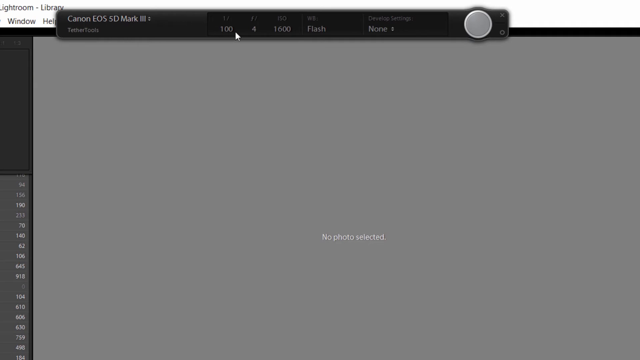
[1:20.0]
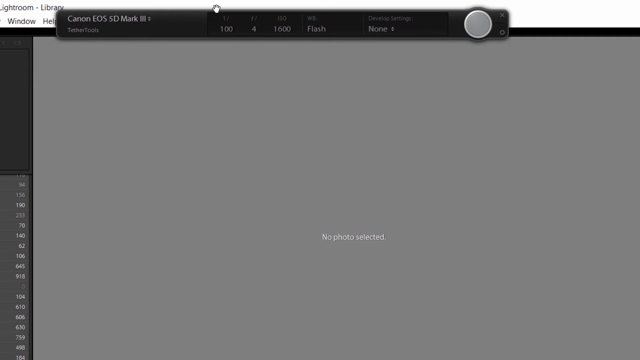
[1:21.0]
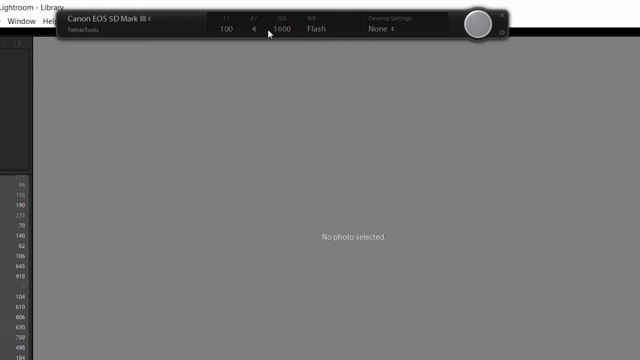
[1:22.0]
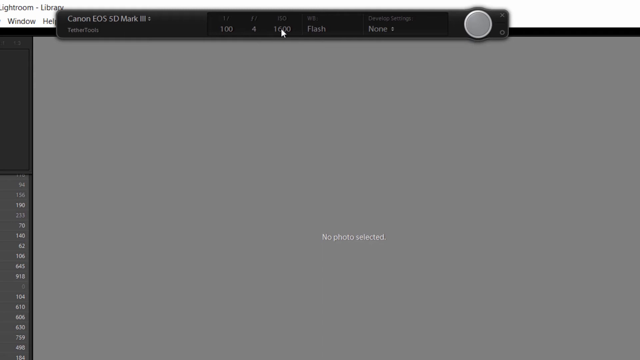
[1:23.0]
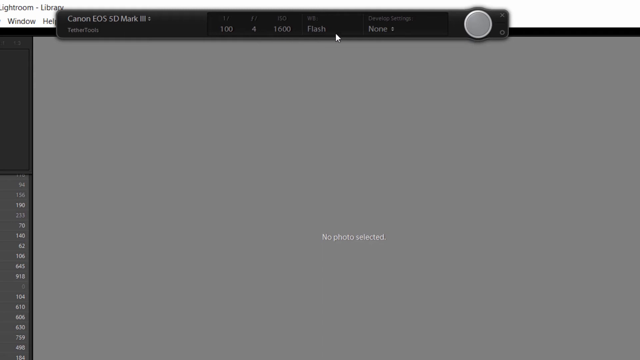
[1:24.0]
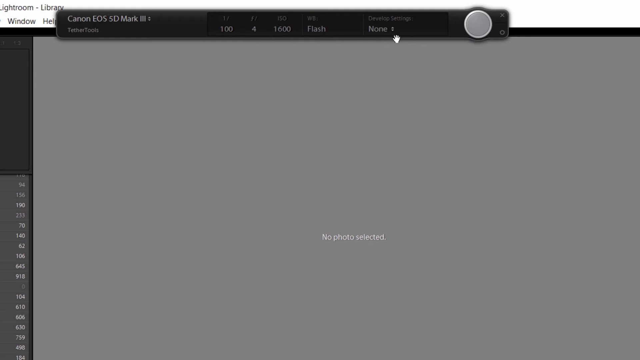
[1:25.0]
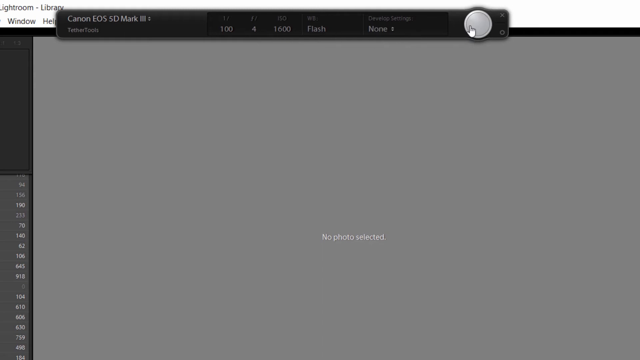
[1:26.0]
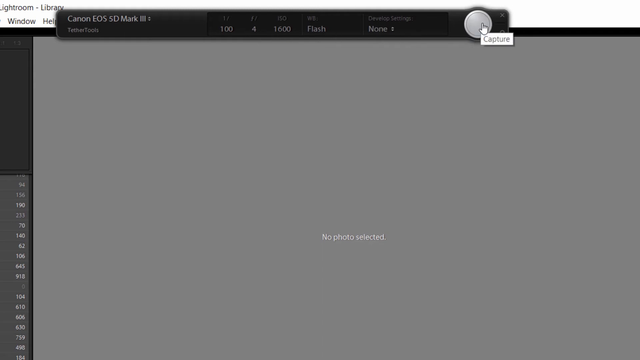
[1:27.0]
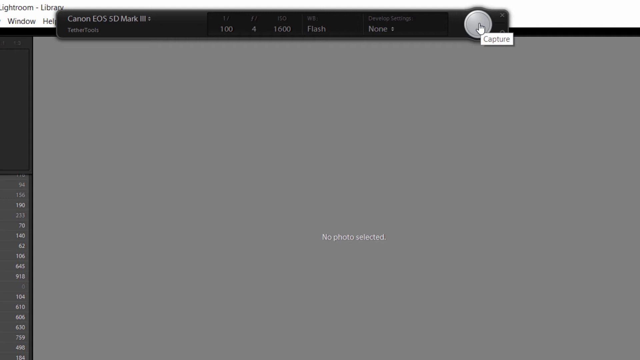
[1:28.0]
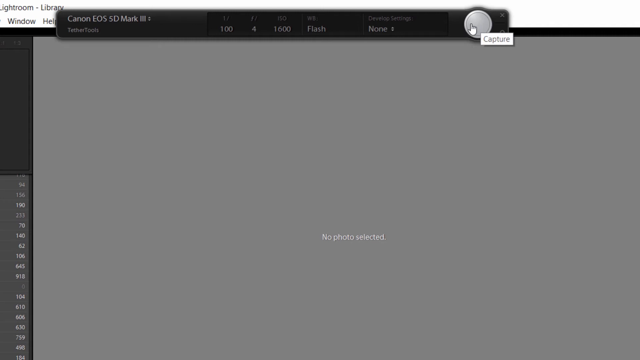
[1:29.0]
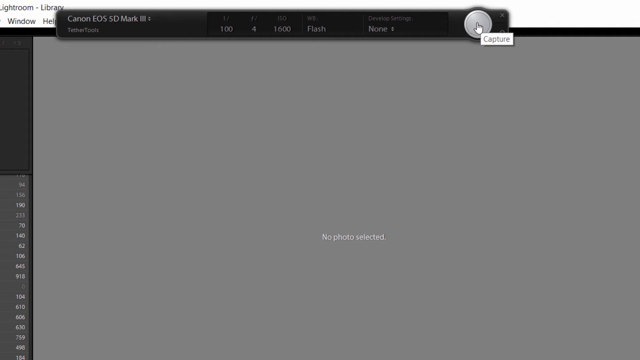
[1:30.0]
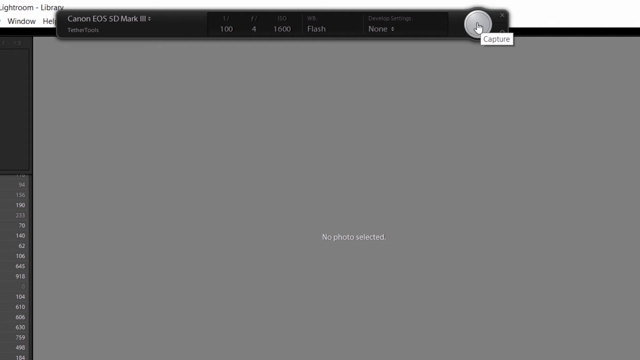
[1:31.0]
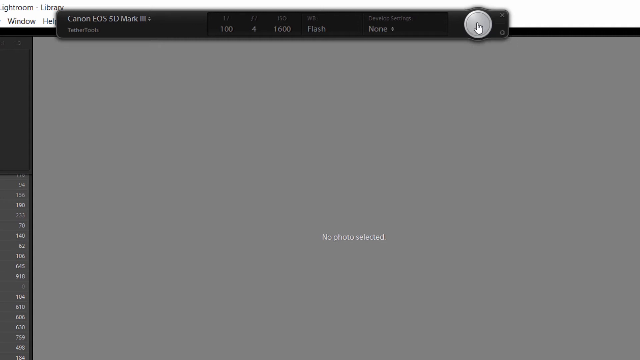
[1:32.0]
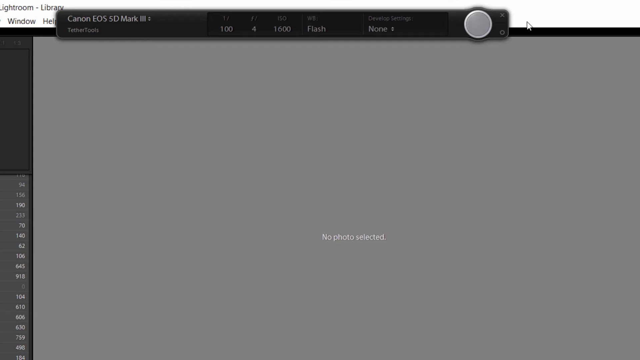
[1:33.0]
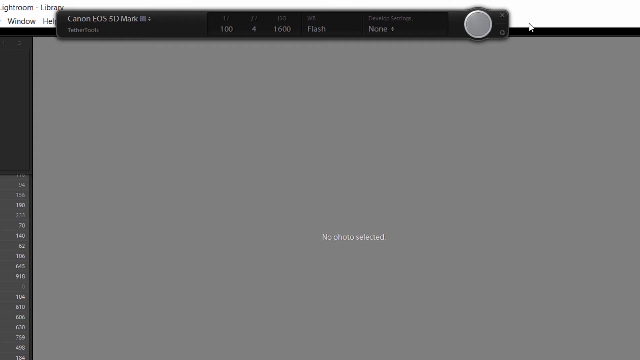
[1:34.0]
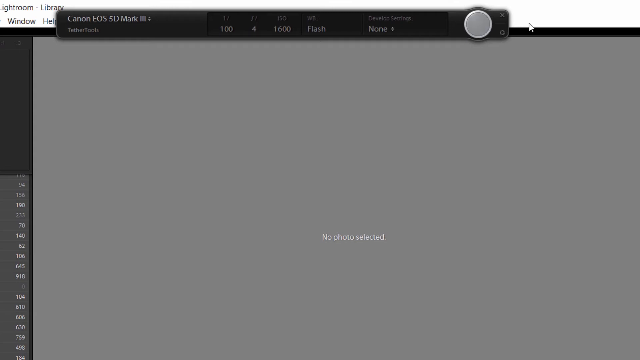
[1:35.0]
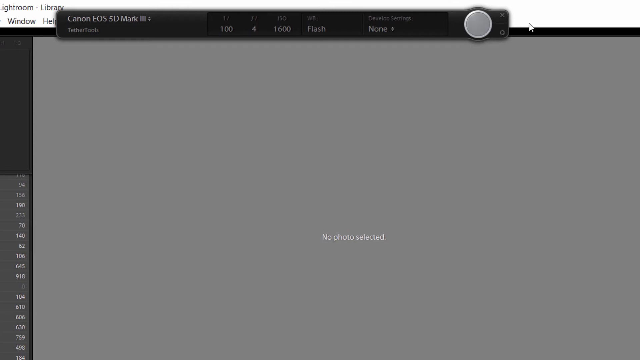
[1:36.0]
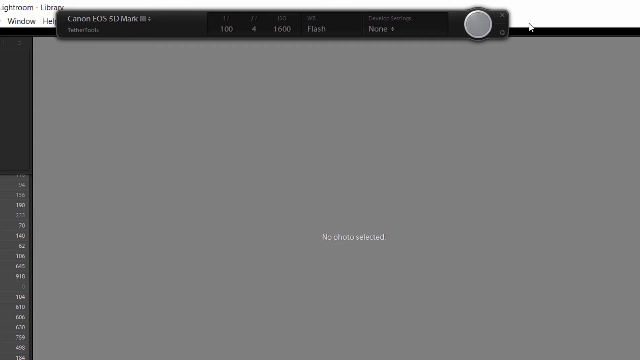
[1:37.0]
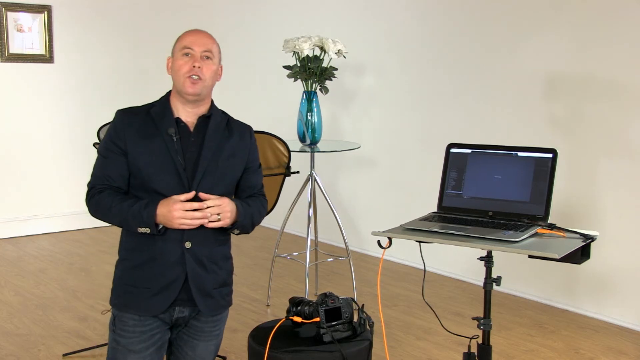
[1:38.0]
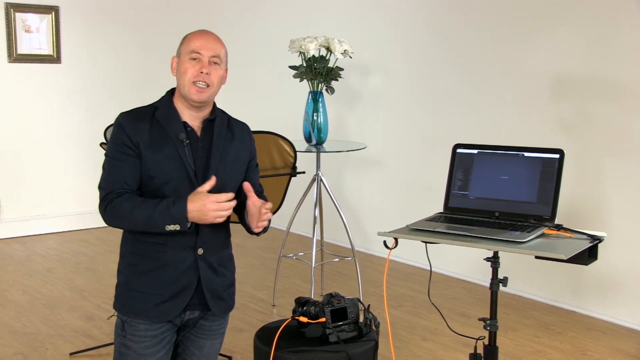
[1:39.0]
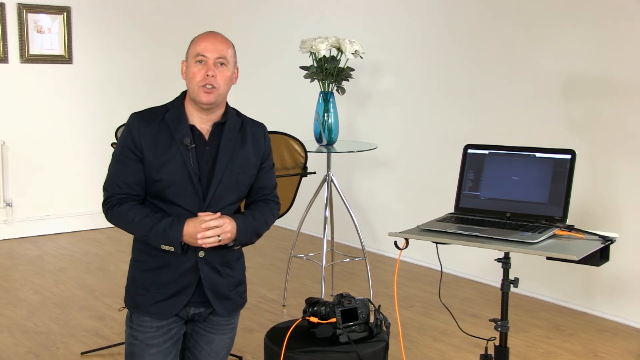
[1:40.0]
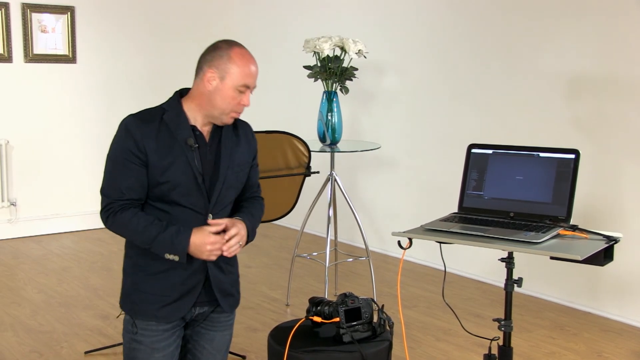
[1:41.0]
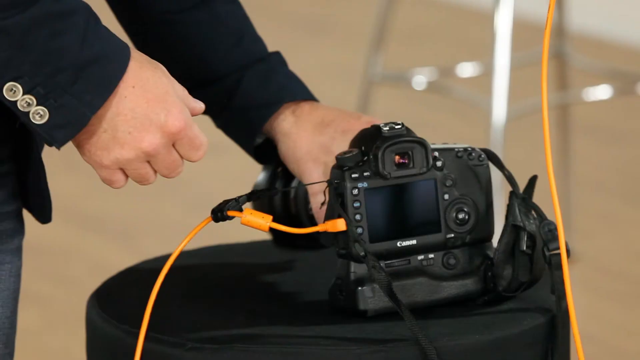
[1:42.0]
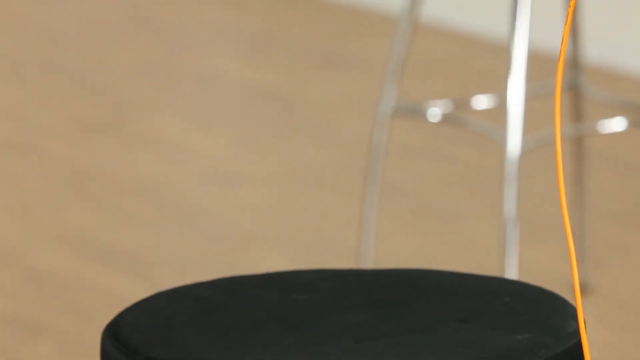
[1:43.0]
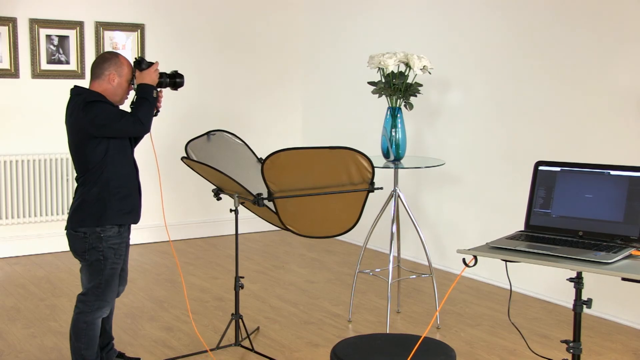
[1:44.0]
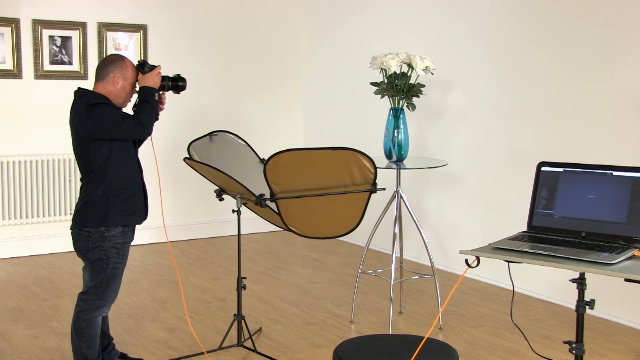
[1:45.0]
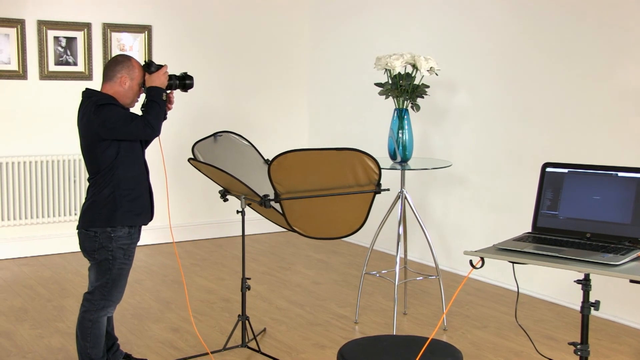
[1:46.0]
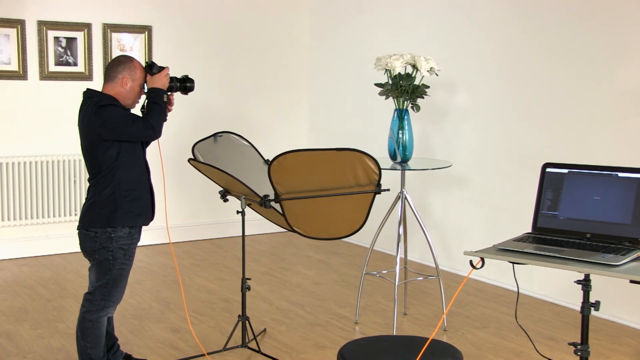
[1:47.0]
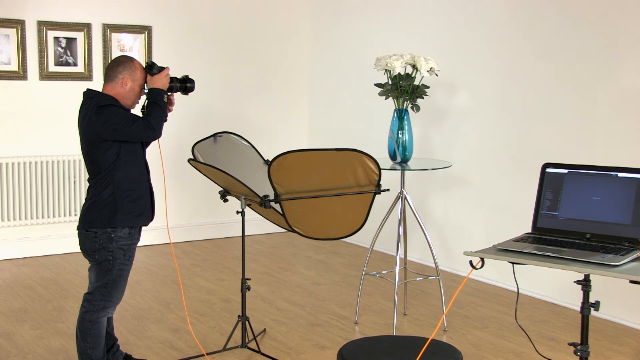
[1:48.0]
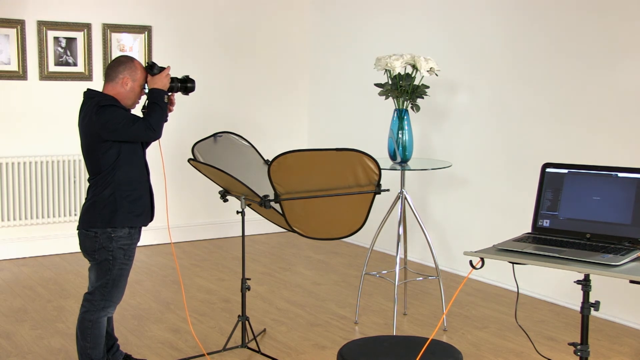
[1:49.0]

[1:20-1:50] He hovers around the top, which shows "1", then "100", "F", "4" and "ISO 1600", the settings of the camera. It also says "flash", and the develop settings say "none". On the right-hand side is a button that reads "caption" when hovered over, with a cross and a circle on its right. The cursor moves away from these options, the screen fades, and the view returns to the green screen room, where the man stands with his fingers still interlaced, this time with the left hand on top. He reaches to the camera with his left hand and picks it up, holding it mostly with his right hand while his left hand is below the camera tweaking the settings. He points it at the blue vase and white flowers on the tall table.